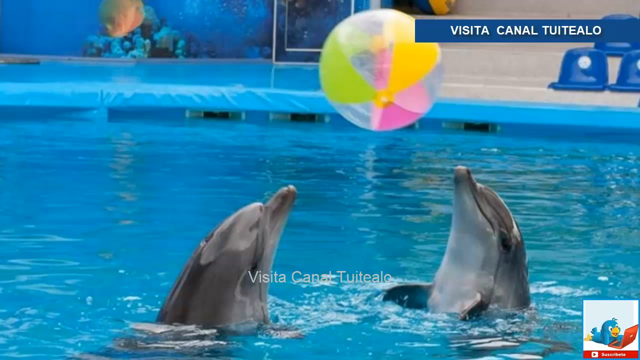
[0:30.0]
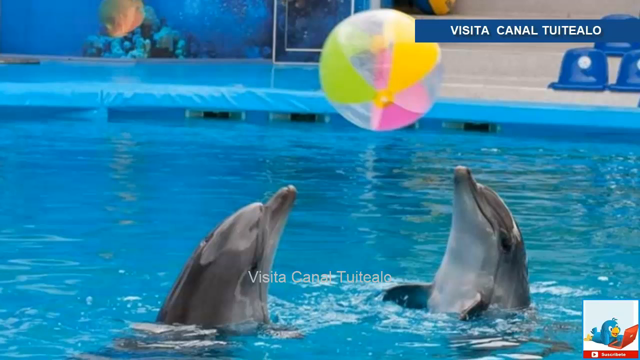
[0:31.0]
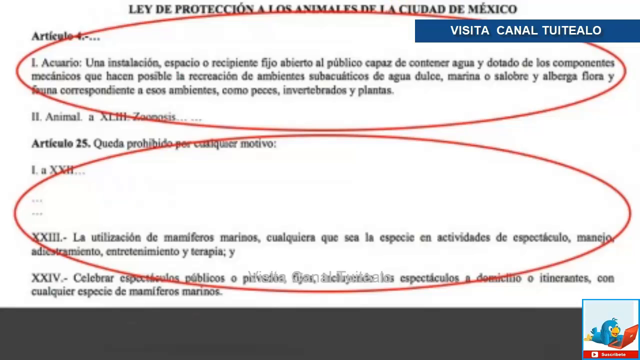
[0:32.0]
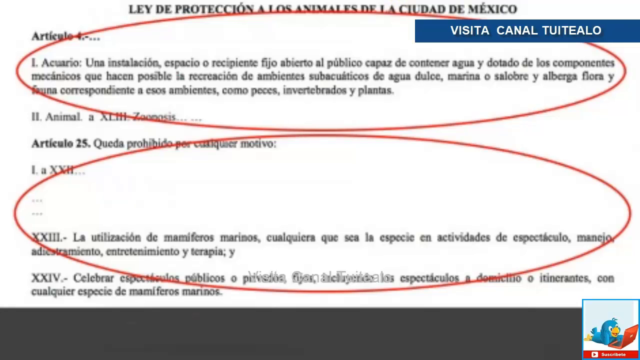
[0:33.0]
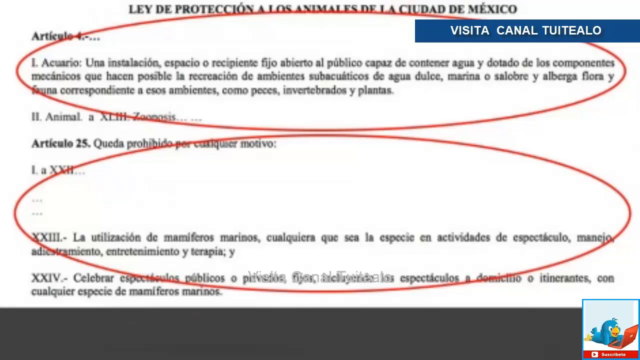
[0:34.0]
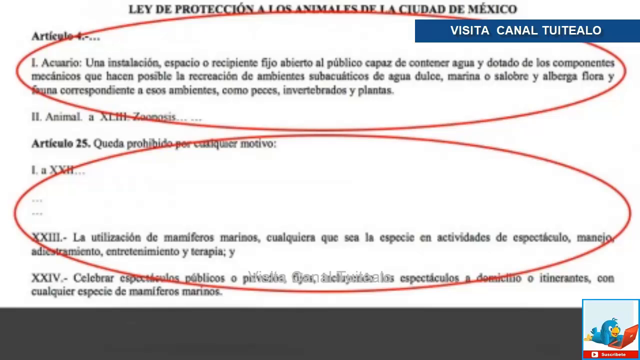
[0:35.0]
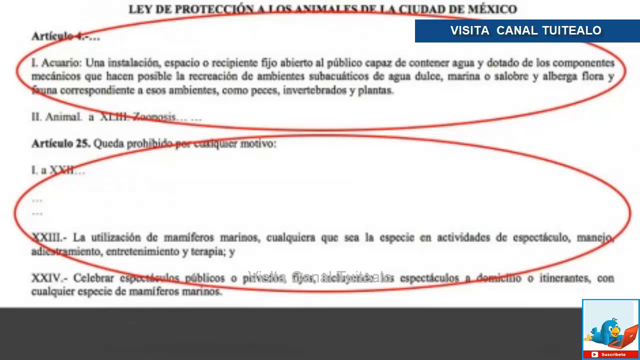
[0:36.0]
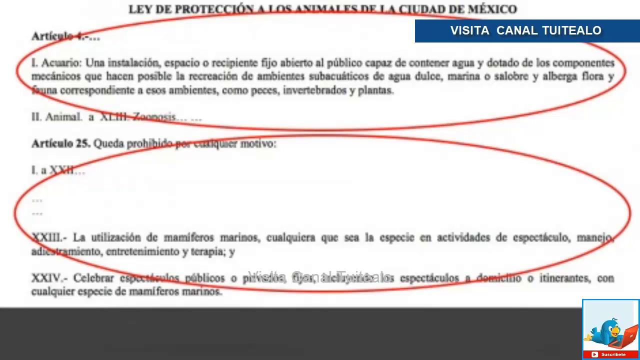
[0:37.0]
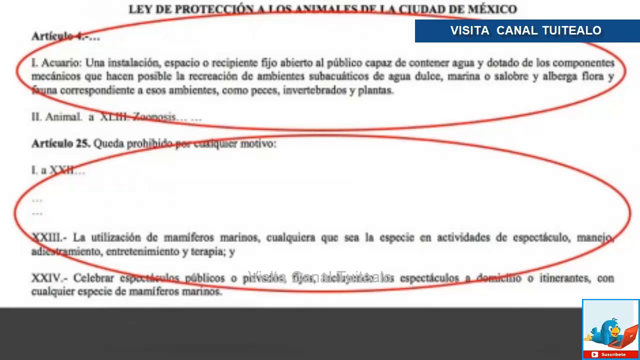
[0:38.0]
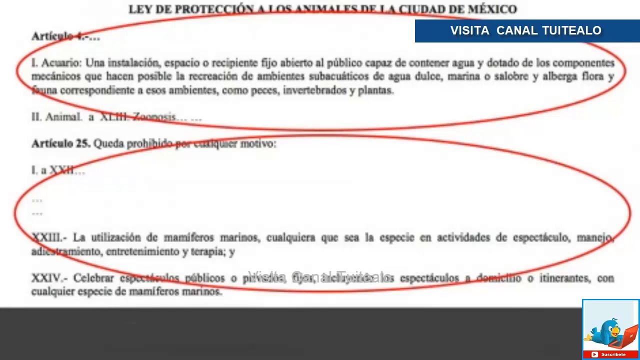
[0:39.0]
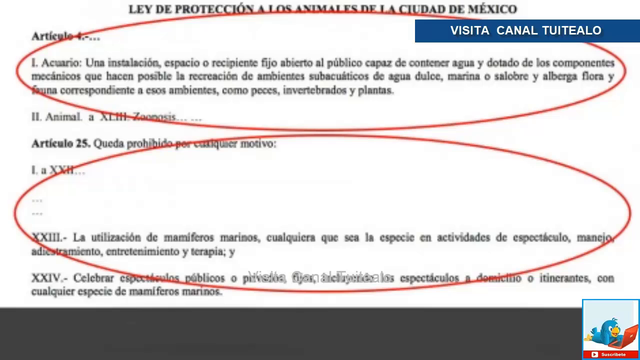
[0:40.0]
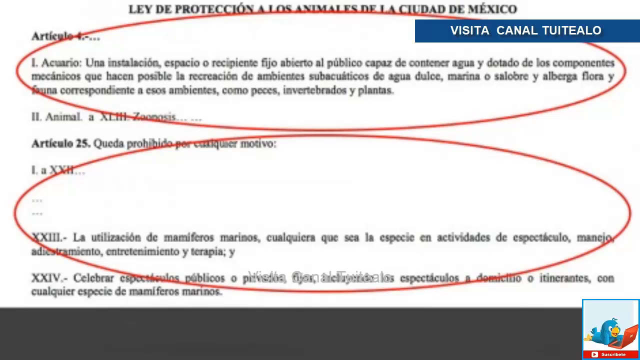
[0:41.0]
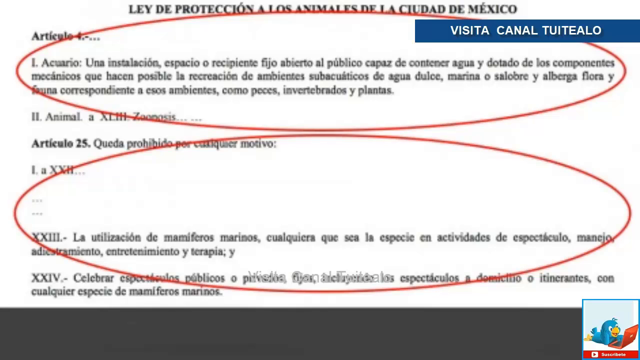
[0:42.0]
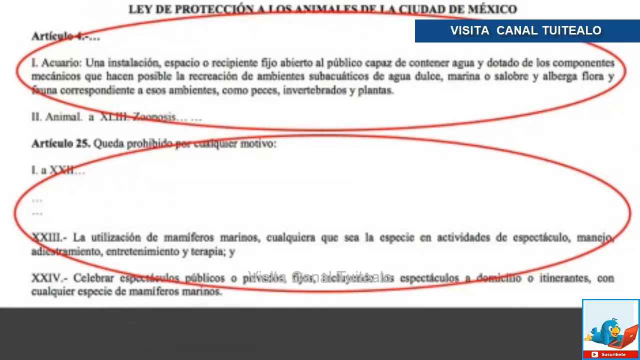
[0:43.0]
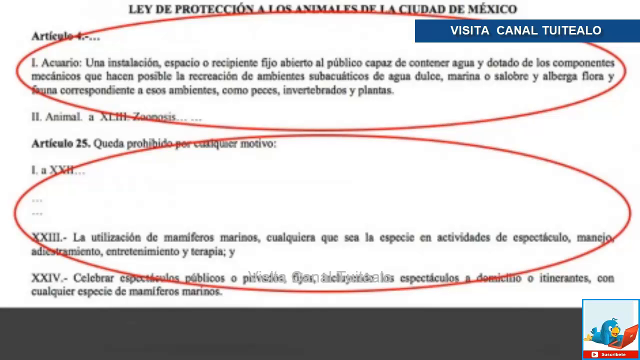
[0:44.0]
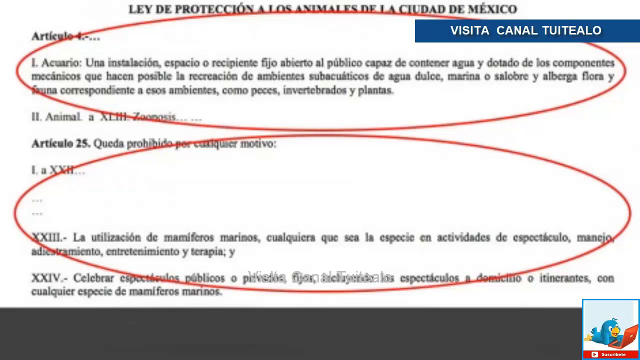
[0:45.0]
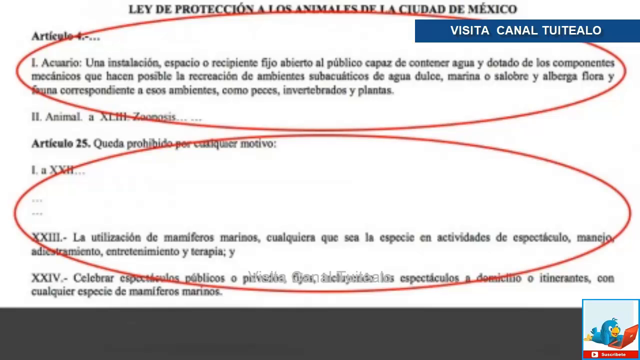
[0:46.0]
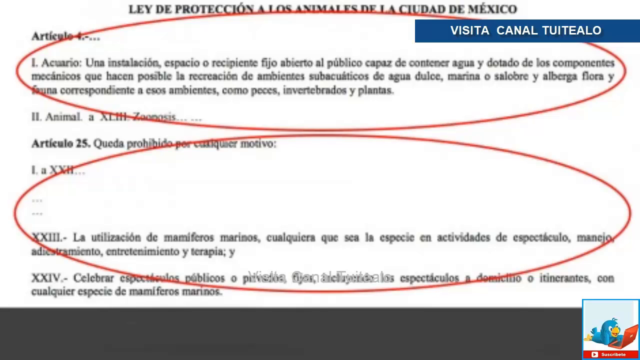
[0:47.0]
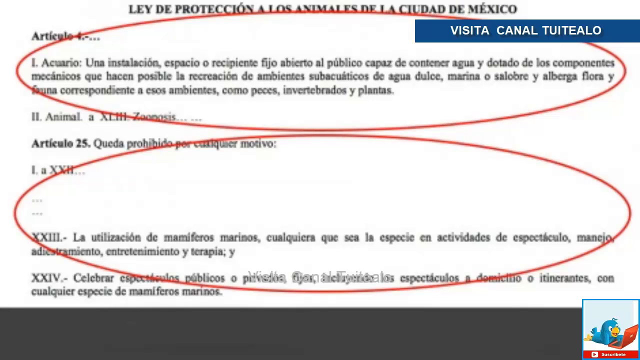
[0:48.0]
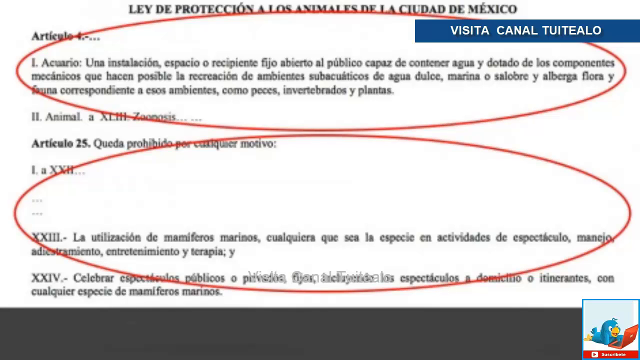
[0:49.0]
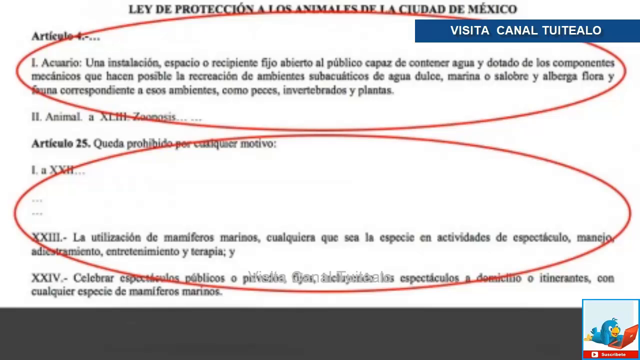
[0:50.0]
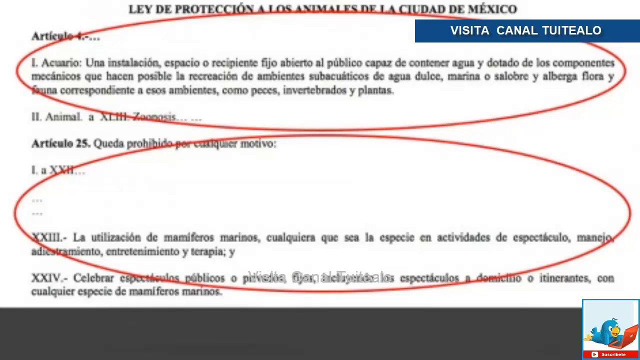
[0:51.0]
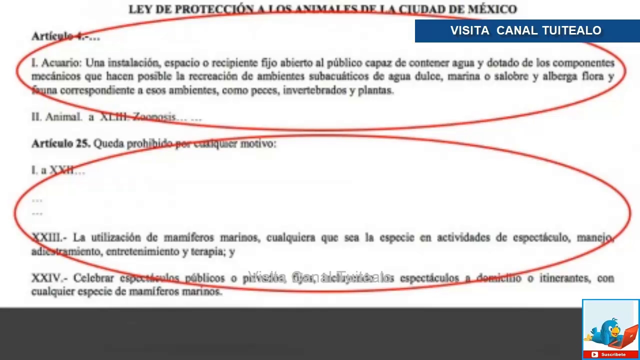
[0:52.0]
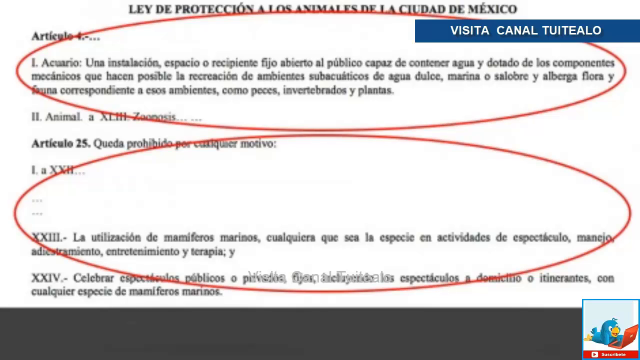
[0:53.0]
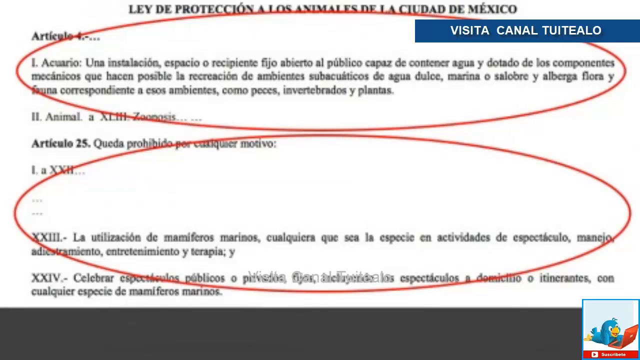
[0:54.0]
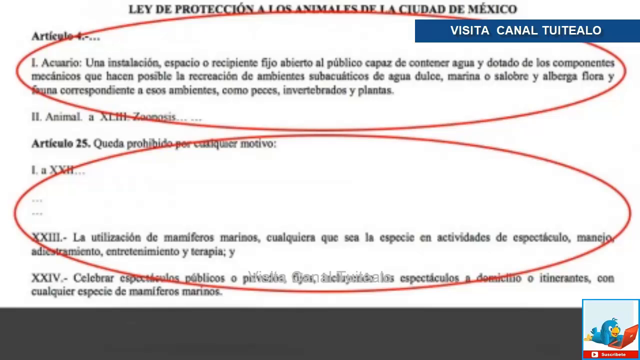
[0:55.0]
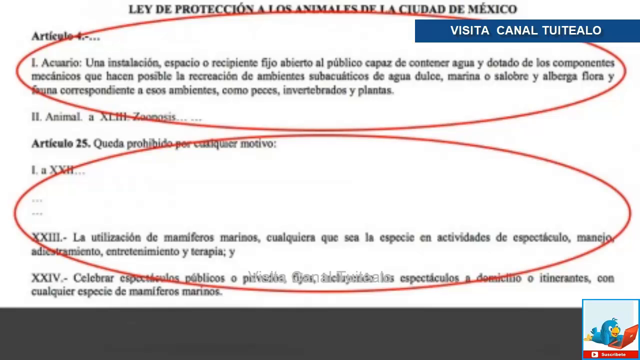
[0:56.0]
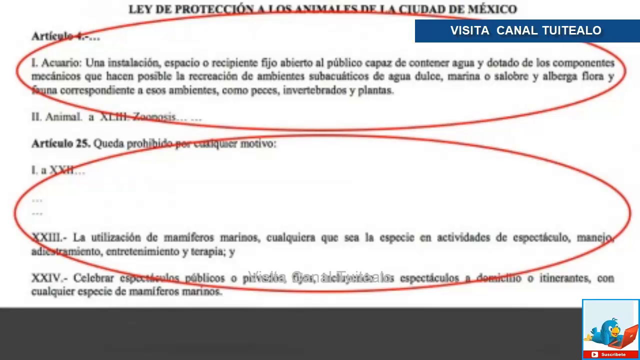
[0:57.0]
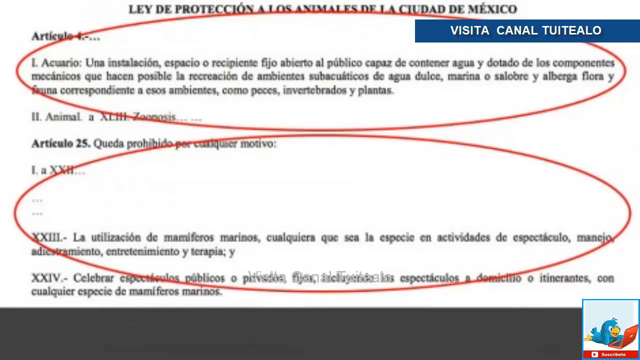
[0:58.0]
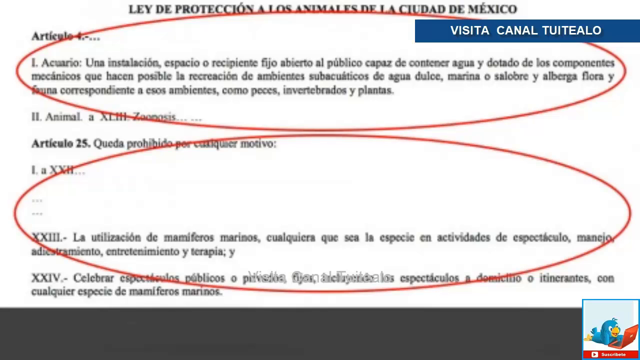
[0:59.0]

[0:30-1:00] The still photograph of the dolphins is shown, then the video cuts to a page of text in Spanish. The text runs down the page, and two red circles highlight parts of it. Roman numerals can be made out in the text. The red lines are perfectly lined up, giving the impression they were done by a computer. The bottom of the screen is black, and in the far bottom right corner is a white box with a blue border containing the little blue bird with a yellow beak and yellow feet, lying on its front and looking at a red laptop.